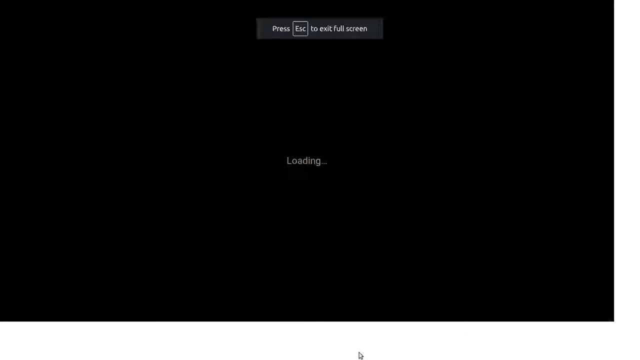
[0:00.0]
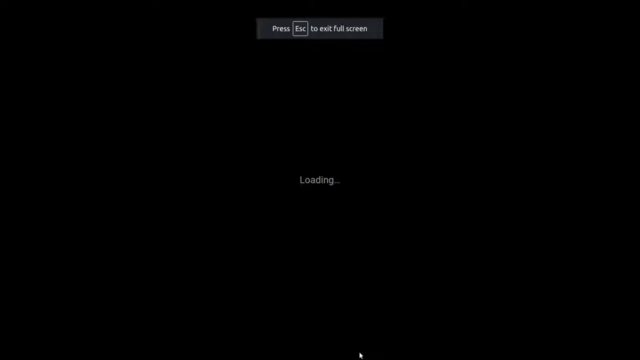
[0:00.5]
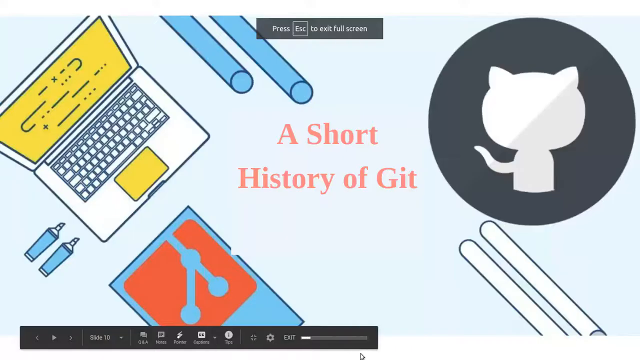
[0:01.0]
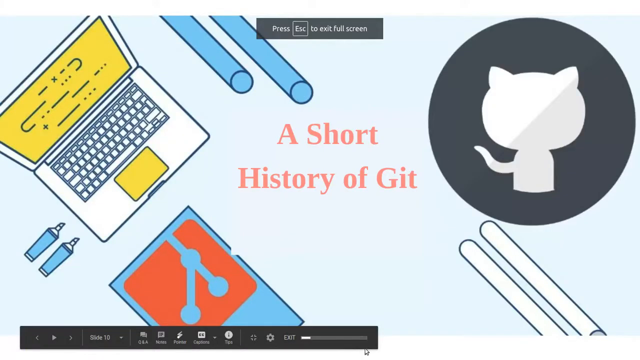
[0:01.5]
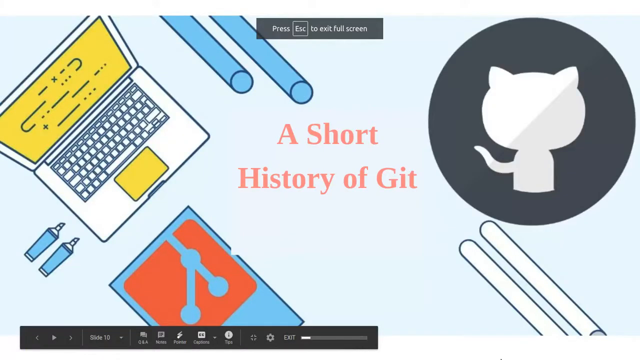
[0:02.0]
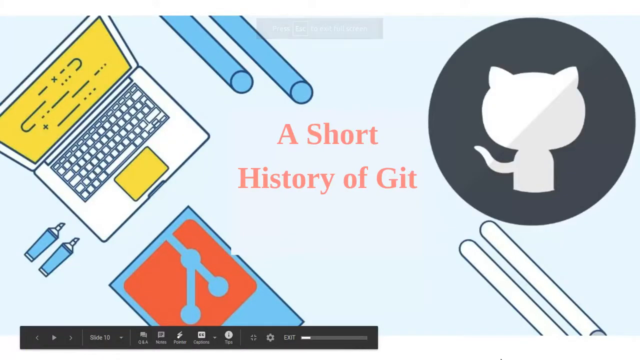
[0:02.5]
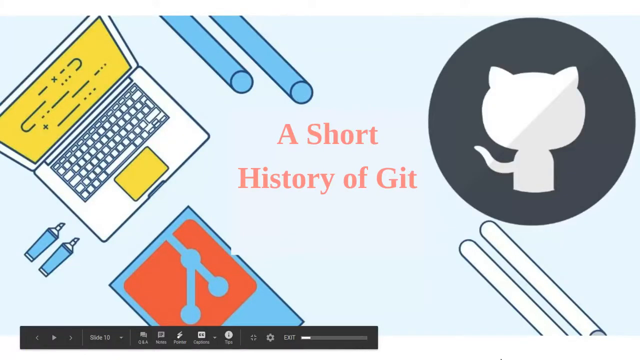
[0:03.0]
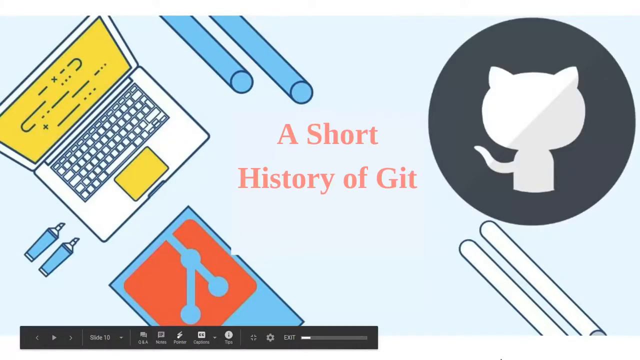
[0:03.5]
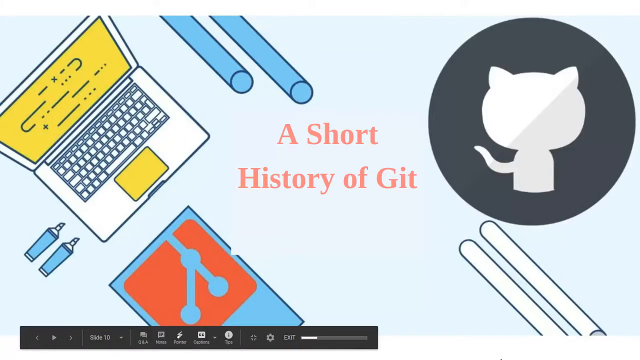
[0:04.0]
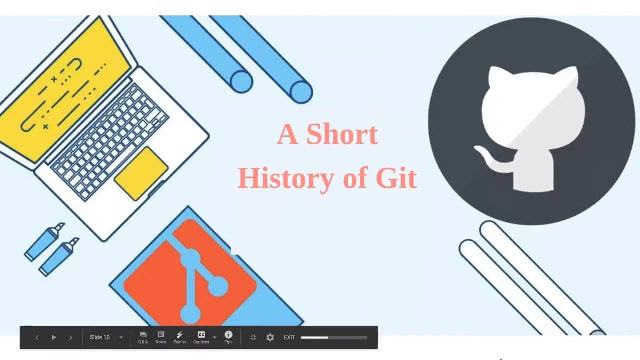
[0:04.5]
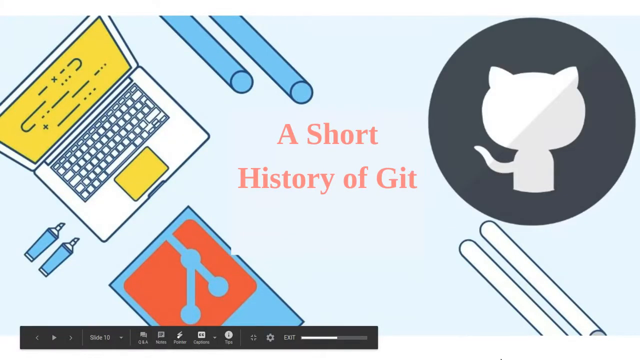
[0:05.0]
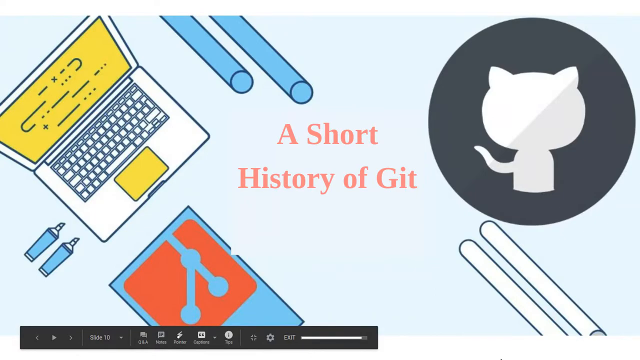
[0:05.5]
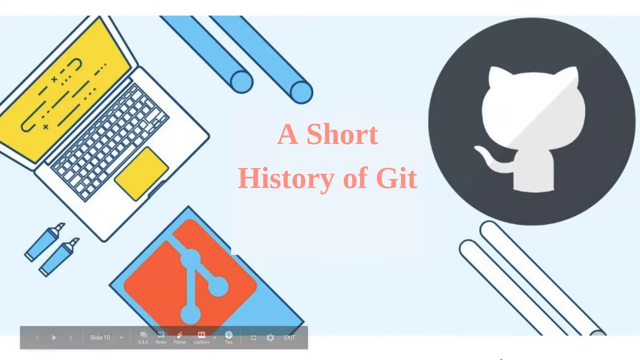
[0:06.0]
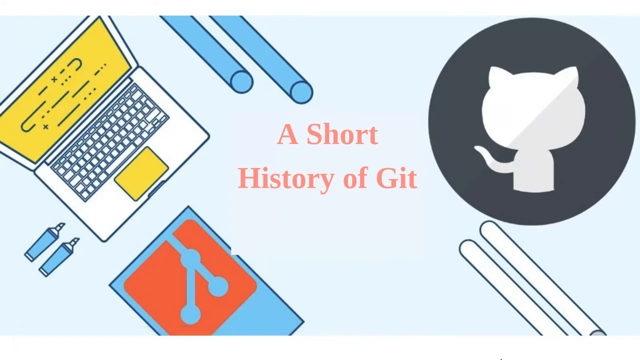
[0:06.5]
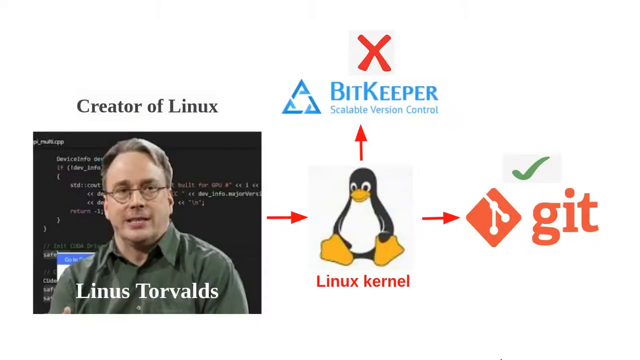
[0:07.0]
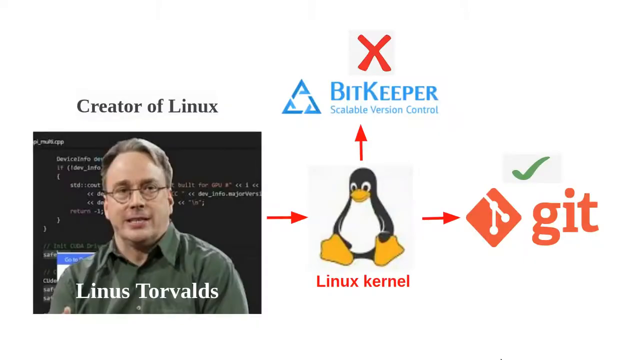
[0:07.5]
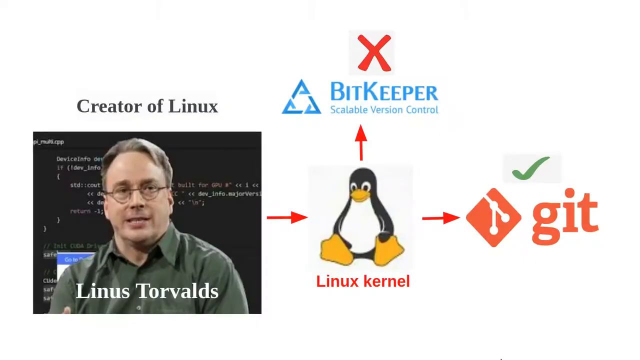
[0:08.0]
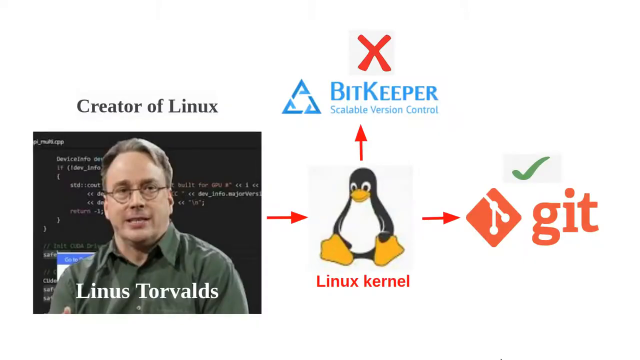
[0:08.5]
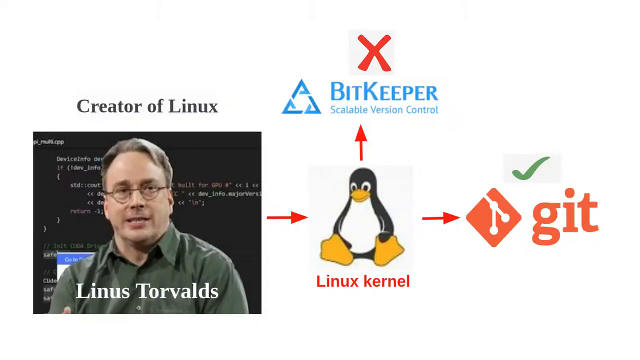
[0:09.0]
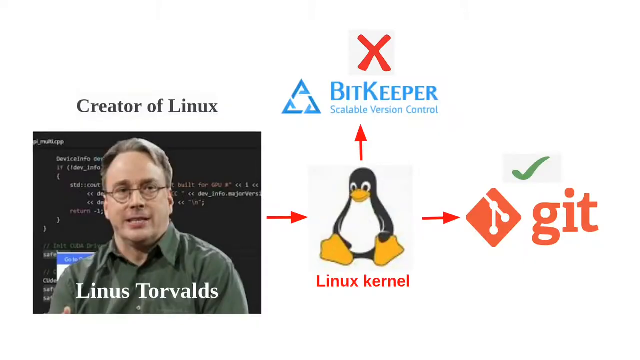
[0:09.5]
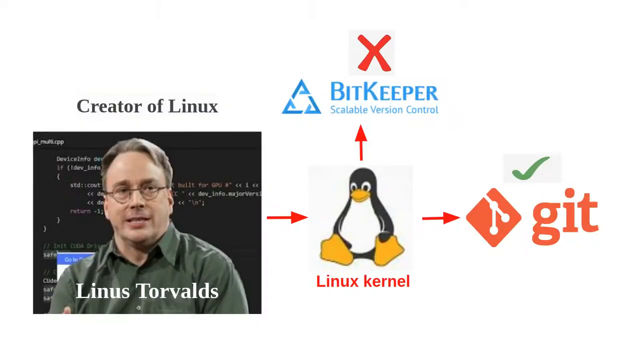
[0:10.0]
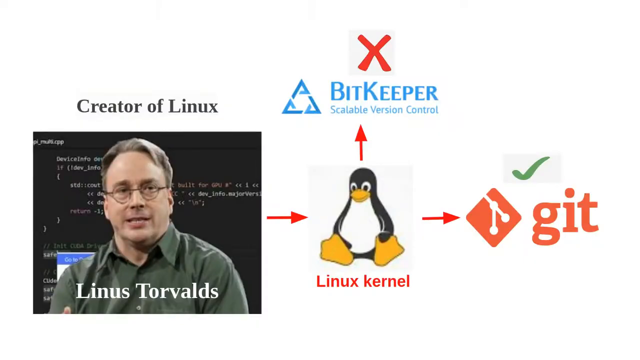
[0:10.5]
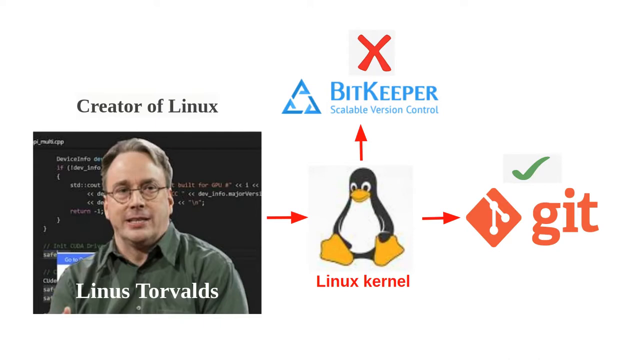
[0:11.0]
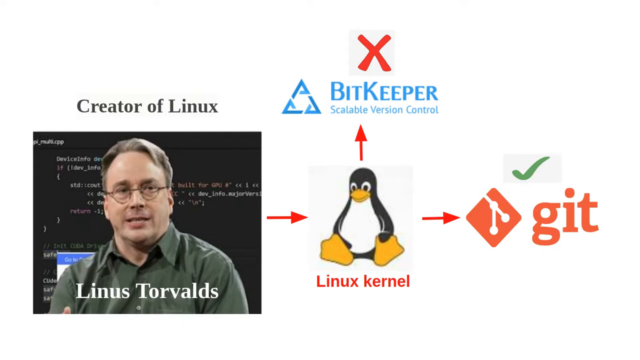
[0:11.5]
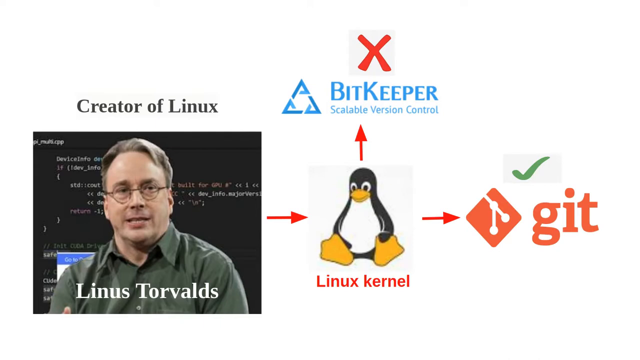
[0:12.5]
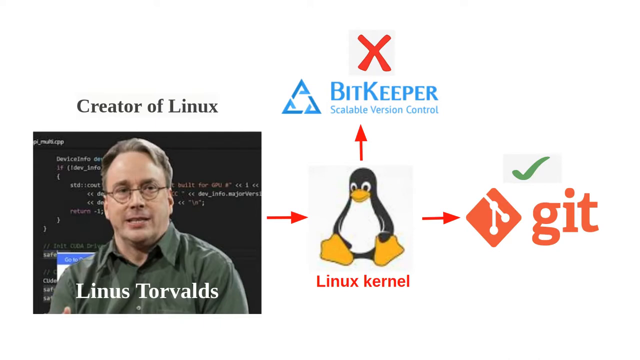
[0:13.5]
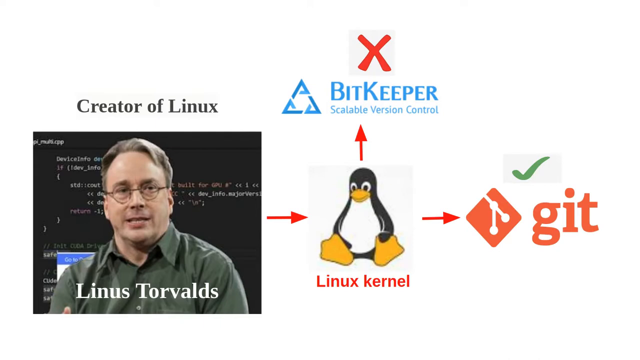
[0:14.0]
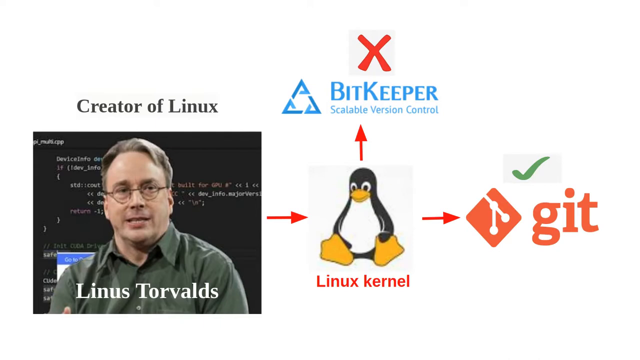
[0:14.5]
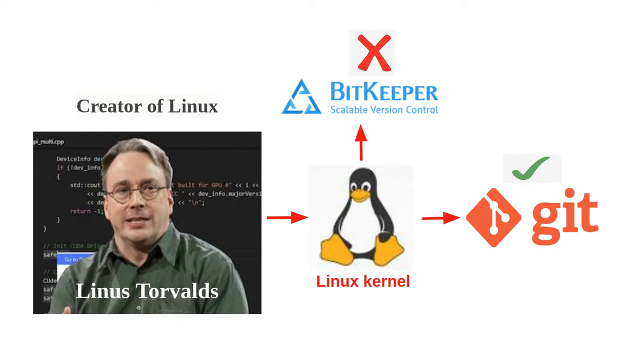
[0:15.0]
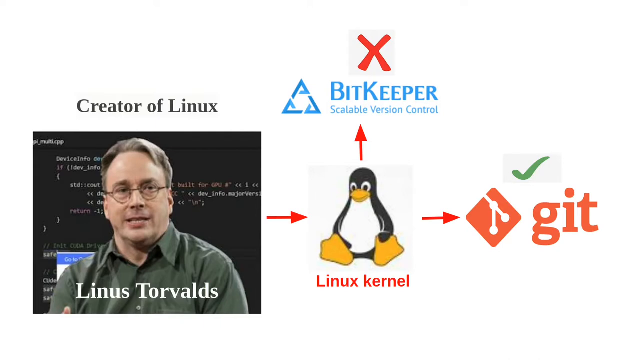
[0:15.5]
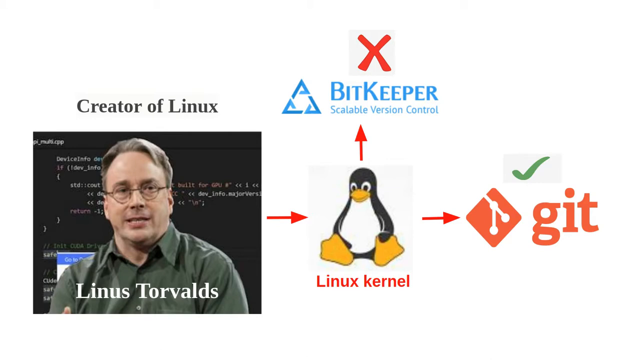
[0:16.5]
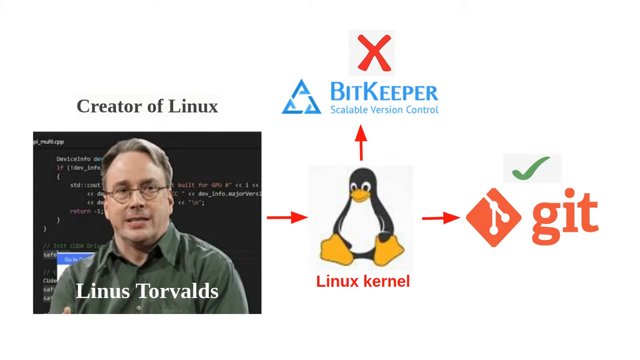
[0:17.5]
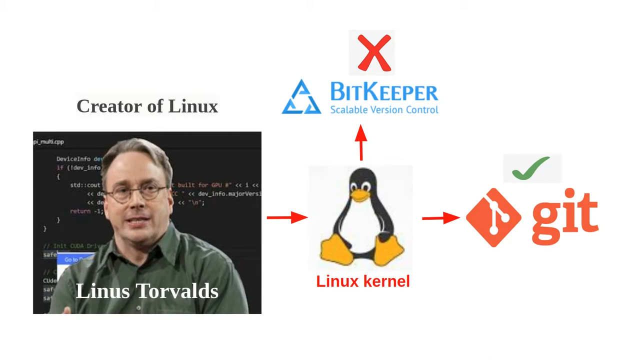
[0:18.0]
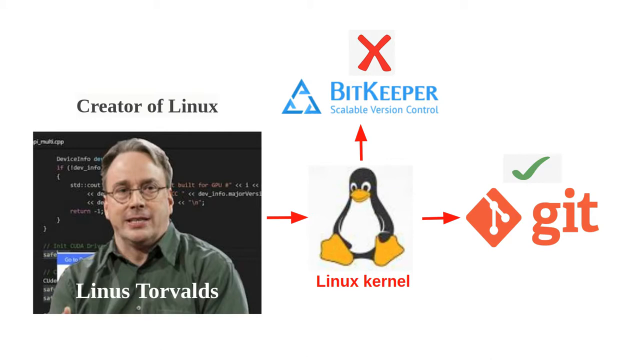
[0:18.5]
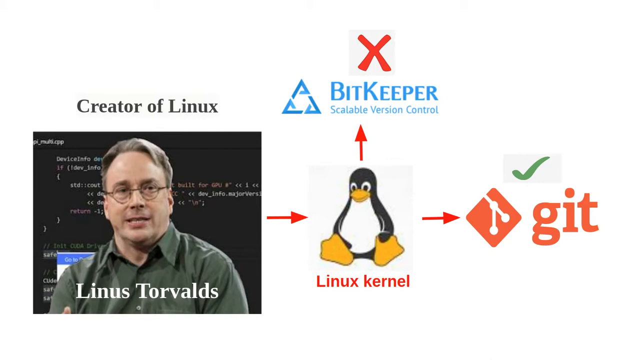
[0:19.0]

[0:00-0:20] The video presents a short history of Git. A photo of Linus, the developer of Git, appears alongside a simple illustration tracing the development from Linus to the Linux kernel to Git. BitKeeper scalable version control also appears in the illustration, which indicates that Git was not developed via BitKeeper. The people and items involved are shown as photo illustrations of Linus and the Linux kernel.